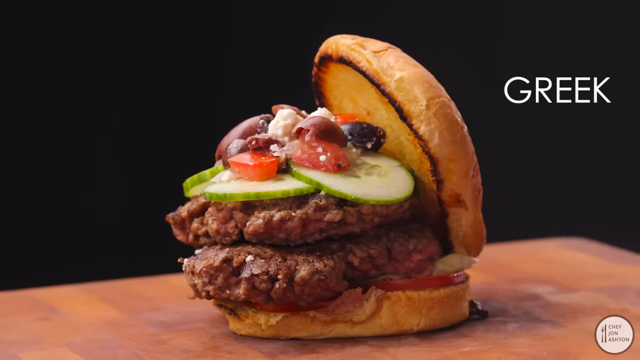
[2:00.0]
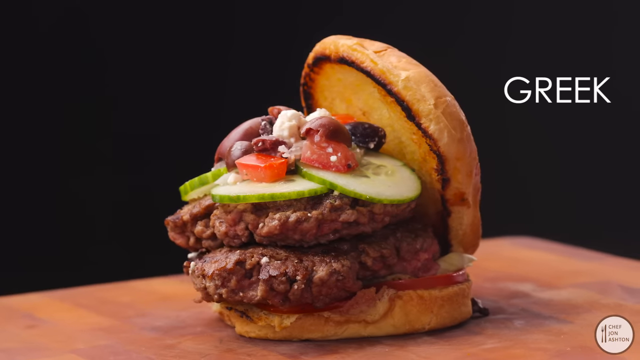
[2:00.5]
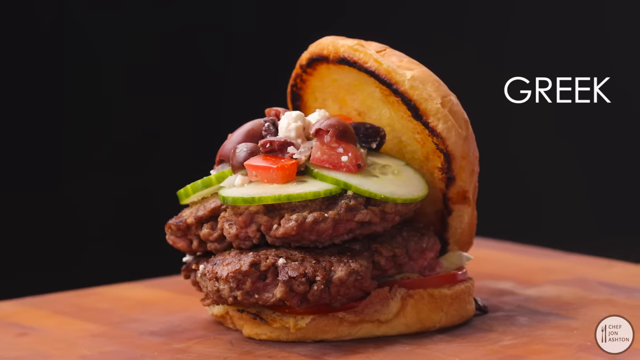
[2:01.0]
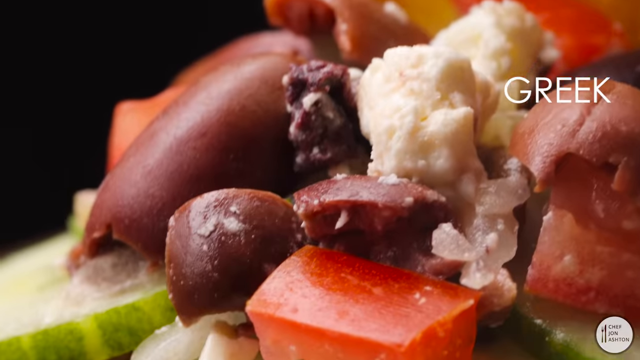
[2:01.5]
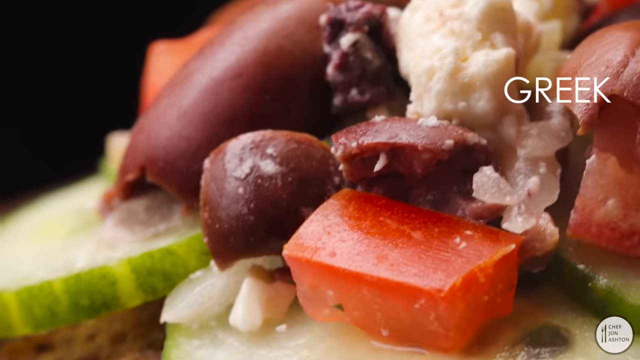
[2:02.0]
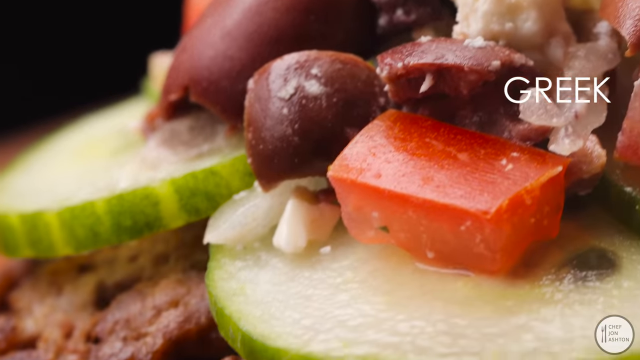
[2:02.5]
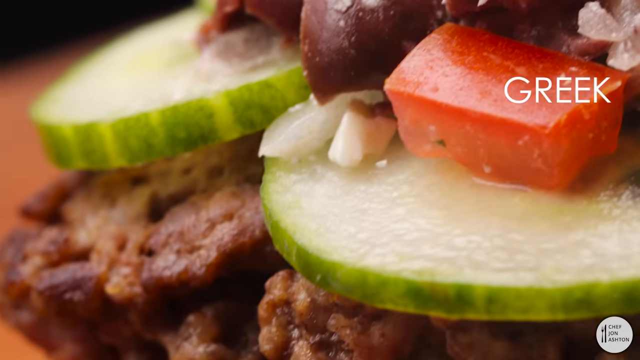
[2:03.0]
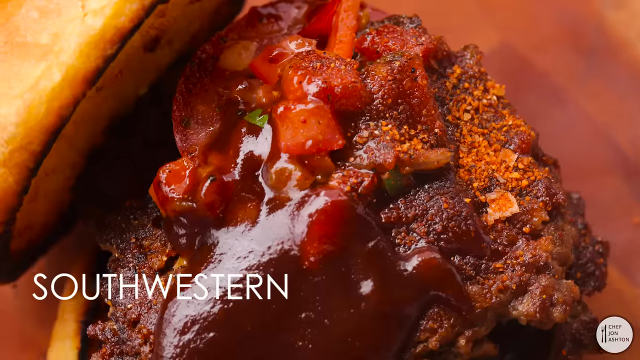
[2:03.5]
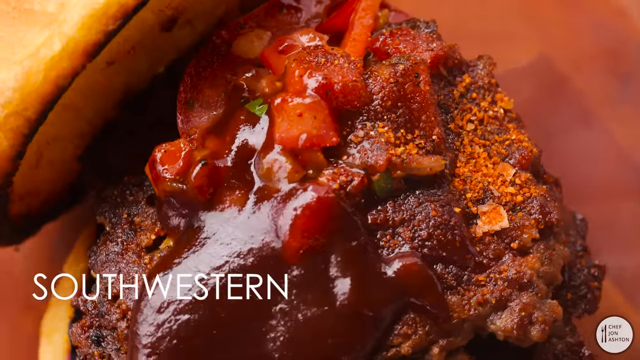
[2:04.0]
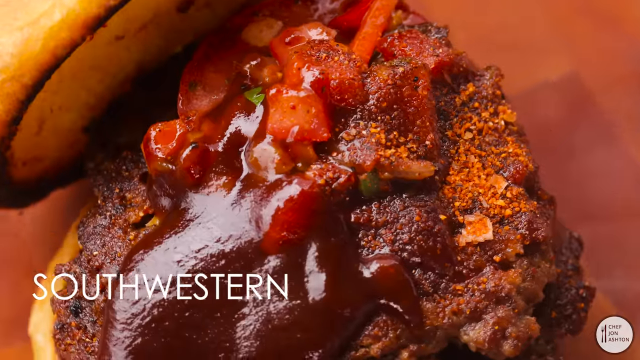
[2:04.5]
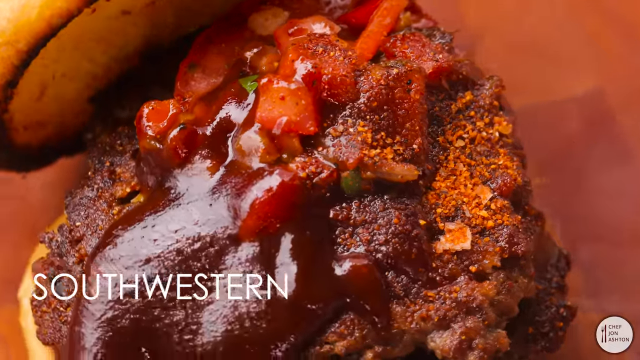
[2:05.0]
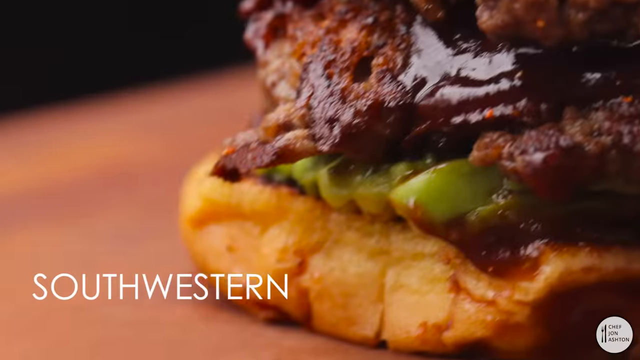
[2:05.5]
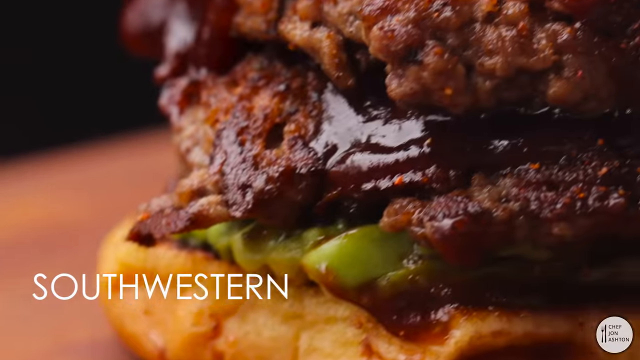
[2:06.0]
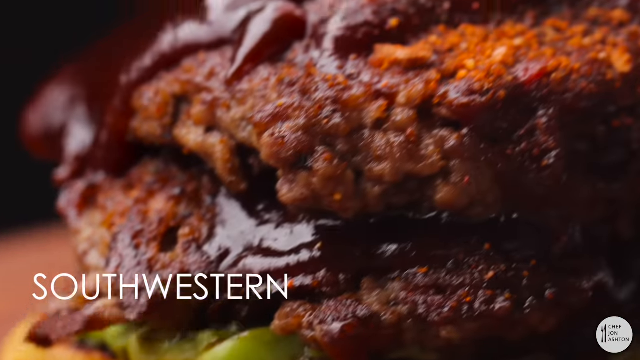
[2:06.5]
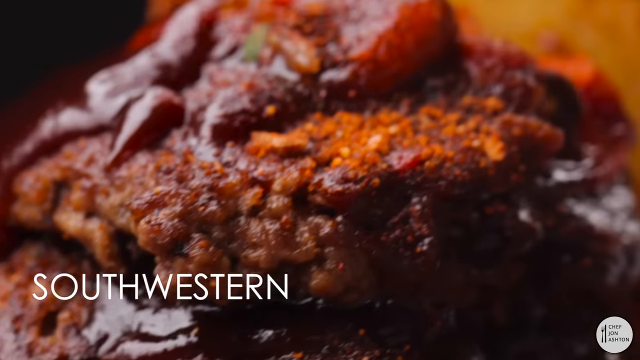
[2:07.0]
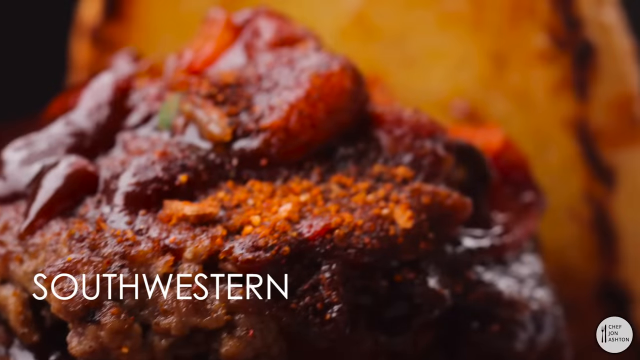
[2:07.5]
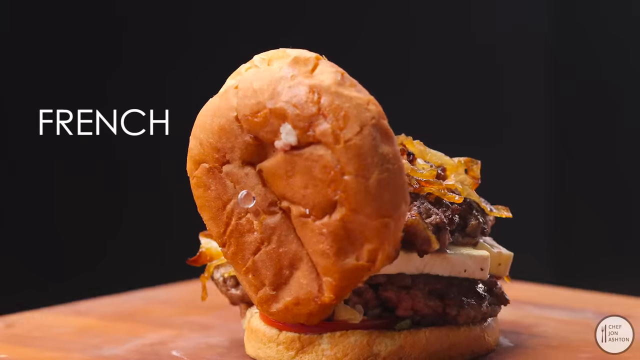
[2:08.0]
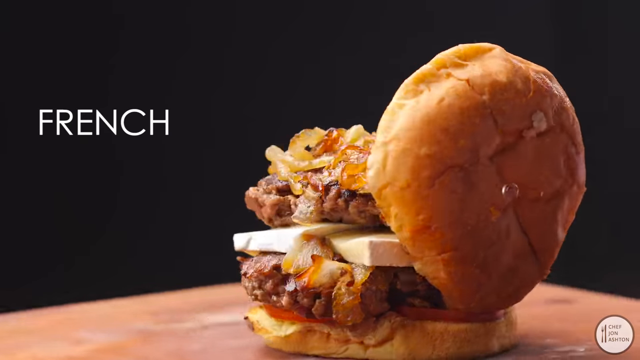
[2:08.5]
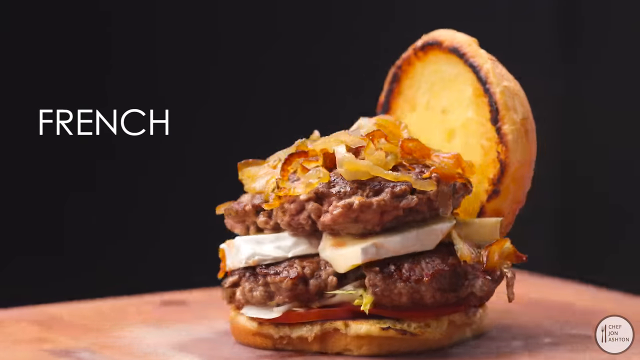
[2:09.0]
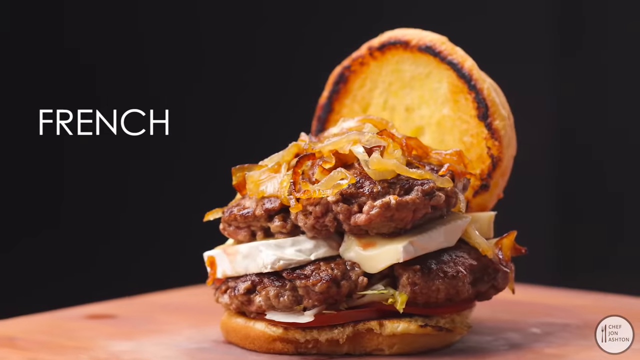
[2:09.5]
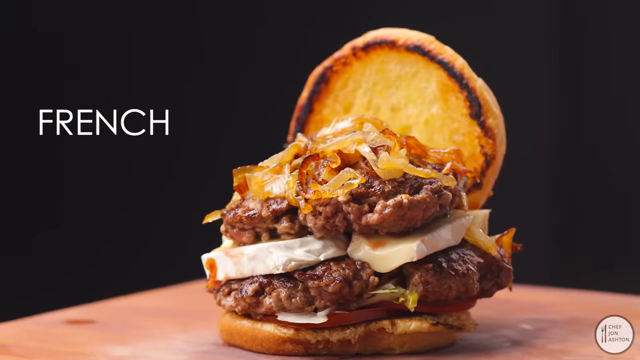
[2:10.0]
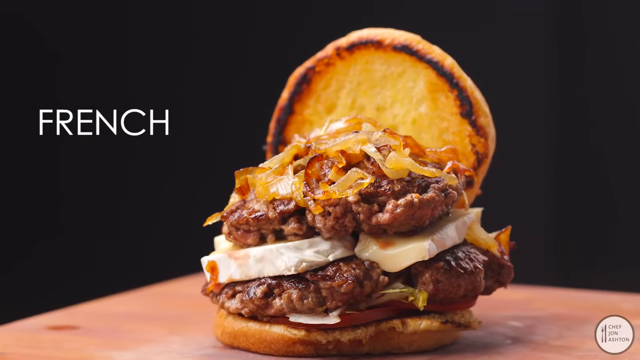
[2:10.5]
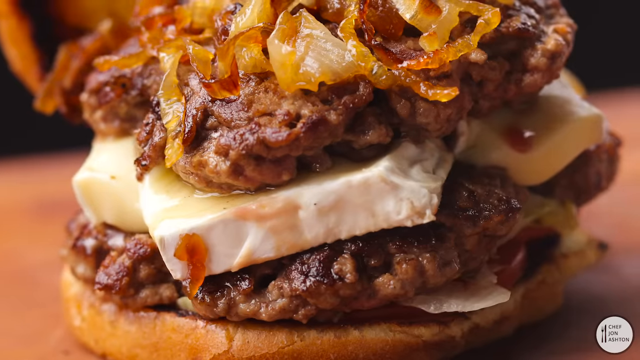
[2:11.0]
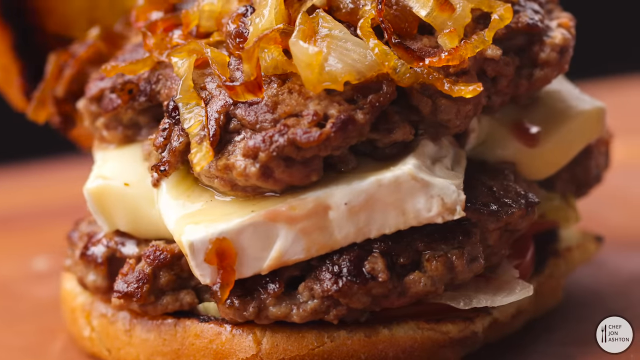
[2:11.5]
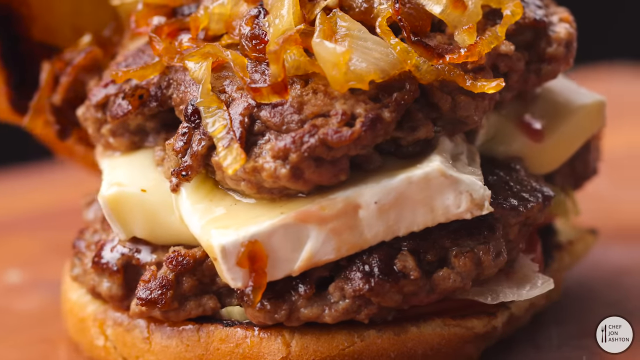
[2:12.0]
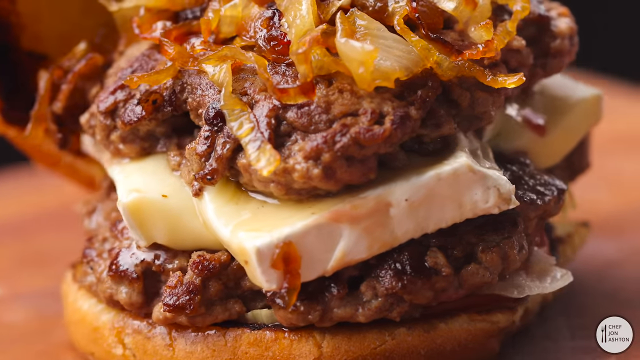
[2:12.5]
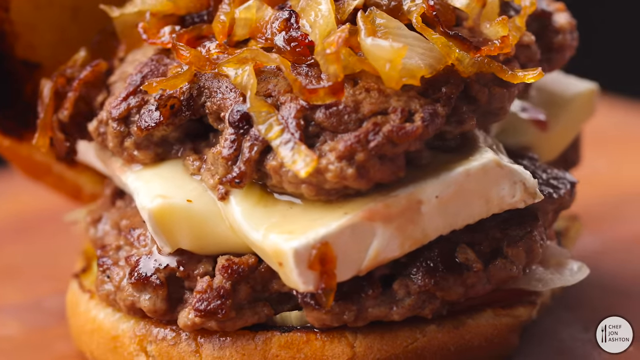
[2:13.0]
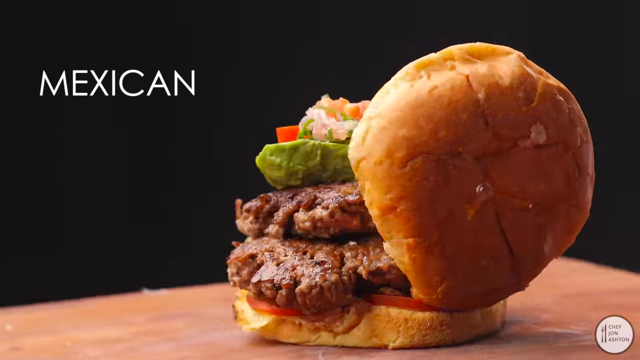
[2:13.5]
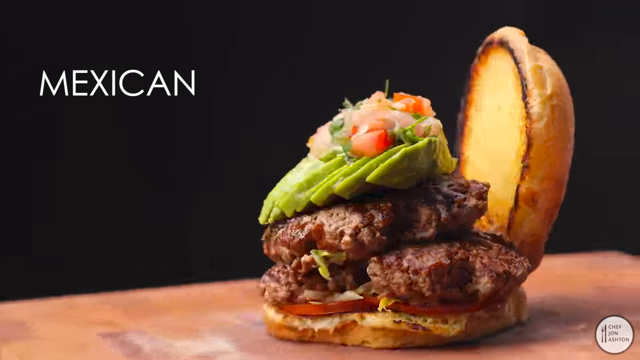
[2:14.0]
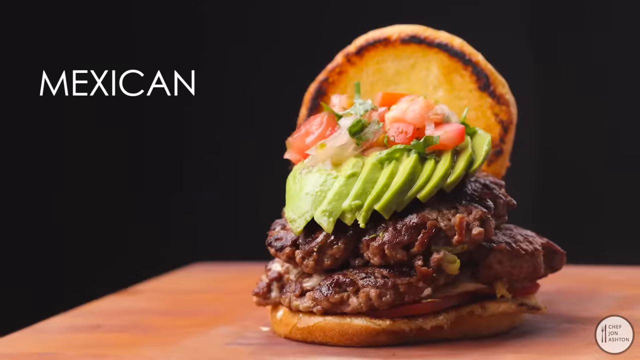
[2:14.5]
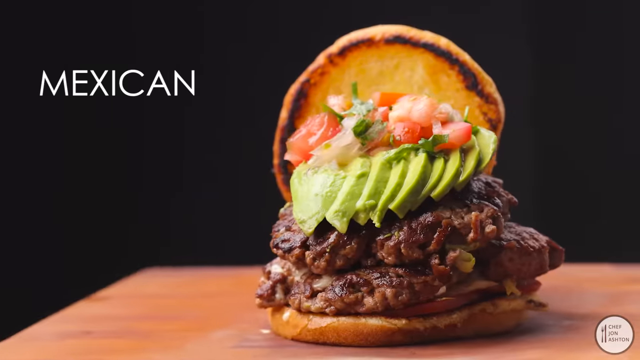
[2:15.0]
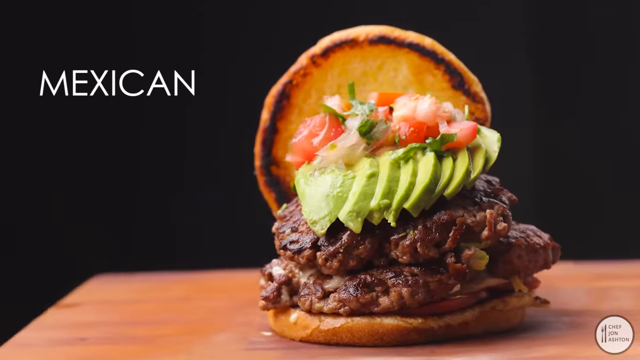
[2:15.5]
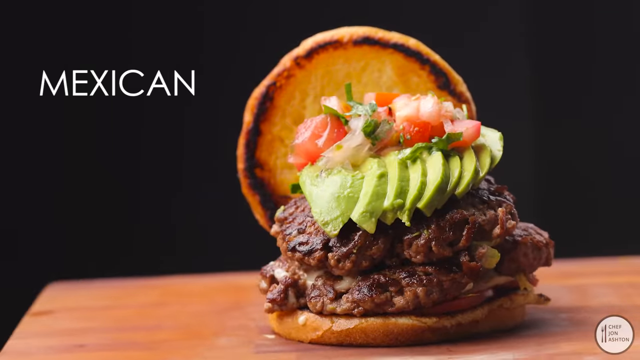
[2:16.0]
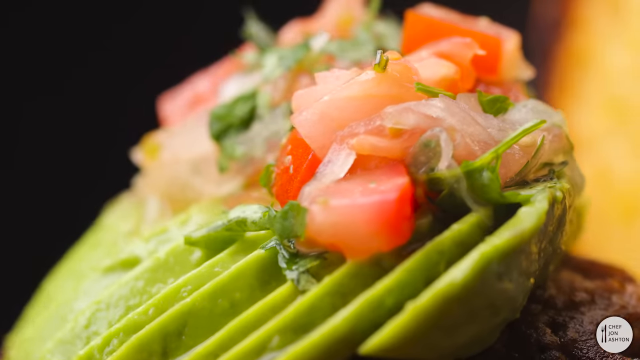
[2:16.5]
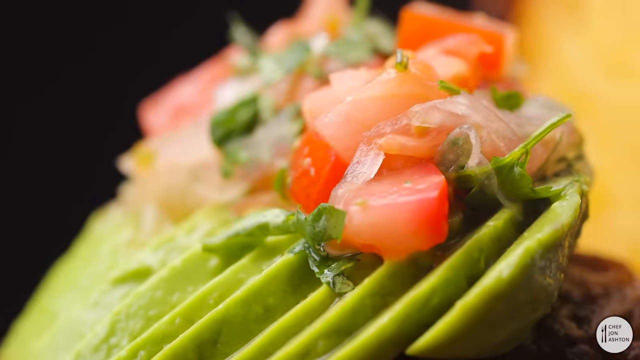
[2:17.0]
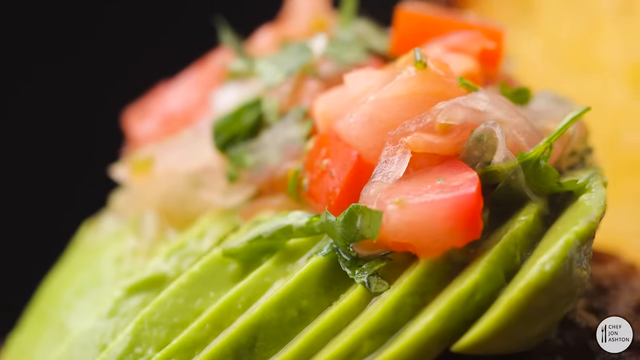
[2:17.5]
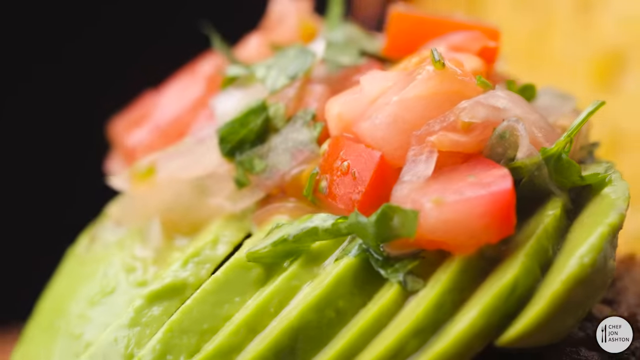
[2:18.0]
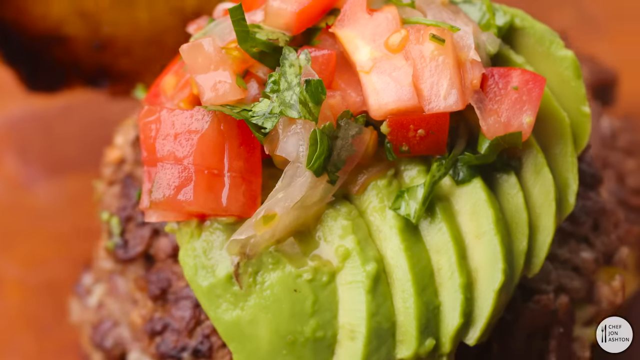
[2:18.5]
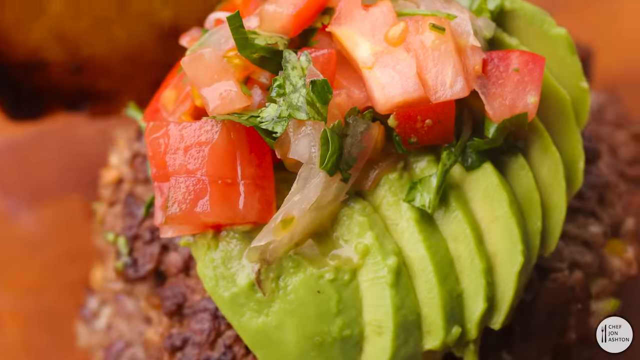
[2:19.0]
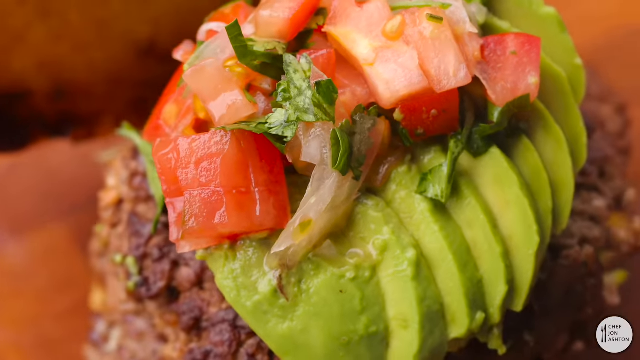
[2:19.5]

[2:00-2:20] Against a black background, some kind of wooden table is at the bottom of the screen. White text in the top right corner reads "Greek." In the center, lying on the wooden-looking surface, is a large cheeseburger or hamburger; no cheese is visible, so it is probably just a double hamburger. It has two hamburger patties and various toppings, looking like maybe cucumber and a few others, and possibly a whole olive on part of the burger. The top bun is lifted off and sideways on the side of the burger, apparently to display the toppings. The hamburger spins slowly counterclockwise. A close-up view of the toppings follows. Next, a different type of burger appears, with different toppings and look, also with its top bun kind of off to the side. White text in the bottom left corner reads "Southwestern," and a side view of the Southwestern burger follows. Then a French burger is shown, with white text in the top left corner reading "French." It is a double-pattied burger with what appear to be grilled onions on top and some other unidentified white stuff in between.